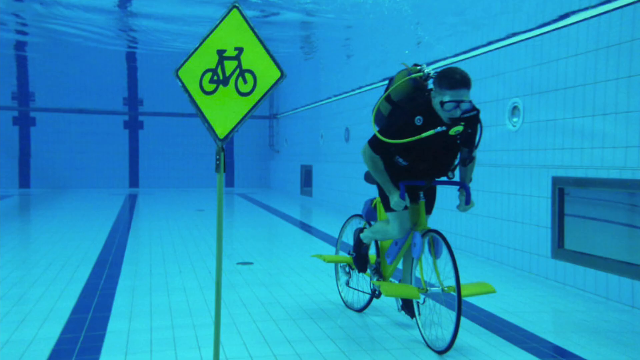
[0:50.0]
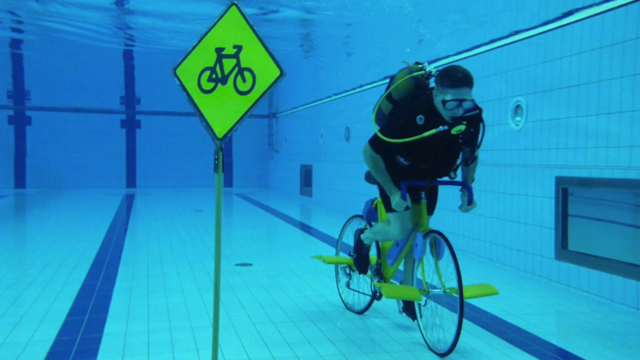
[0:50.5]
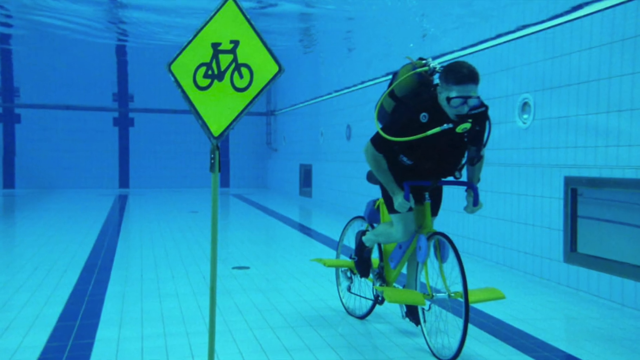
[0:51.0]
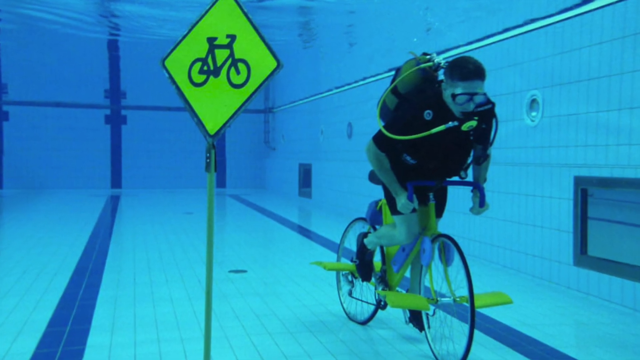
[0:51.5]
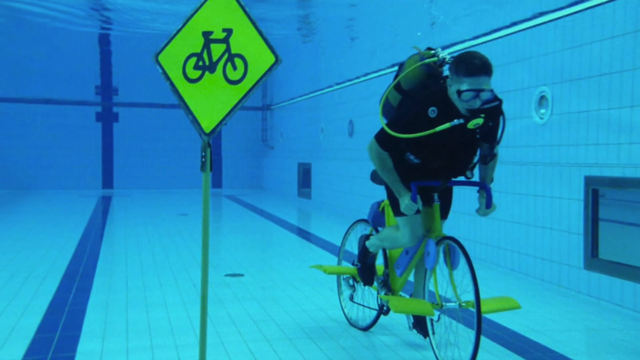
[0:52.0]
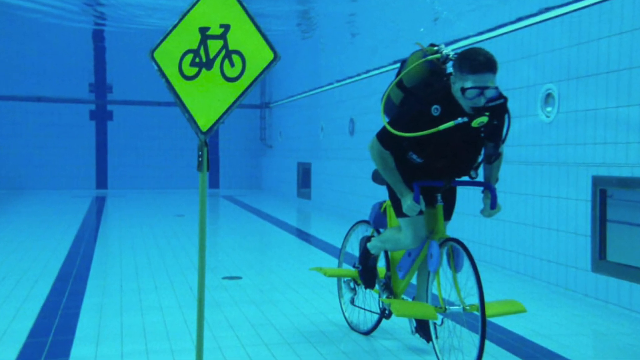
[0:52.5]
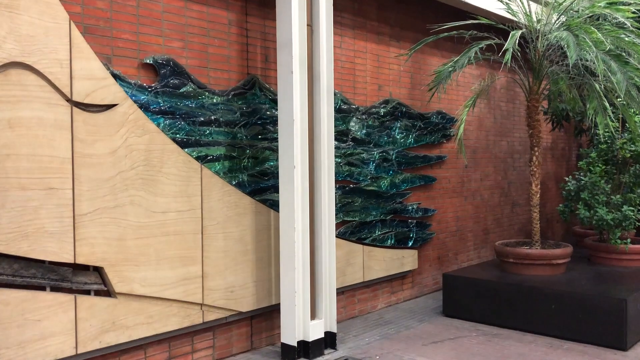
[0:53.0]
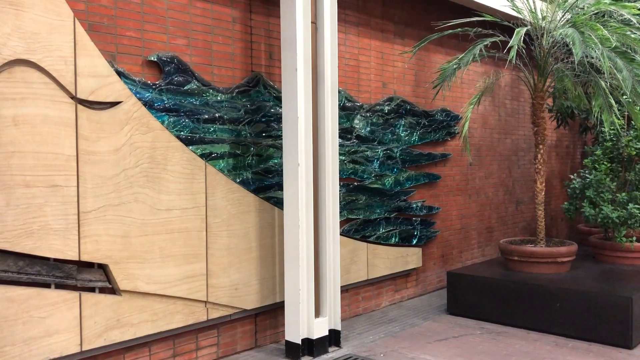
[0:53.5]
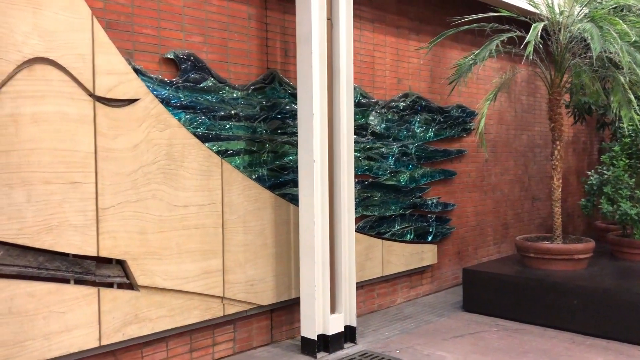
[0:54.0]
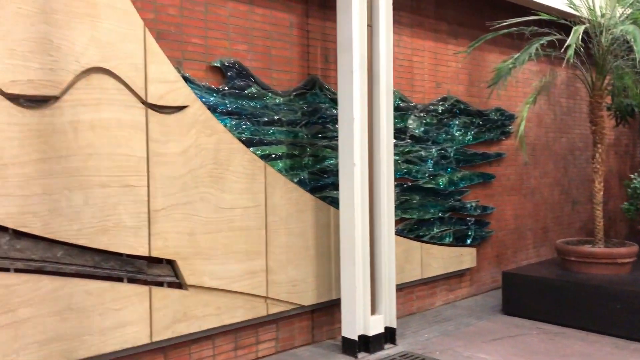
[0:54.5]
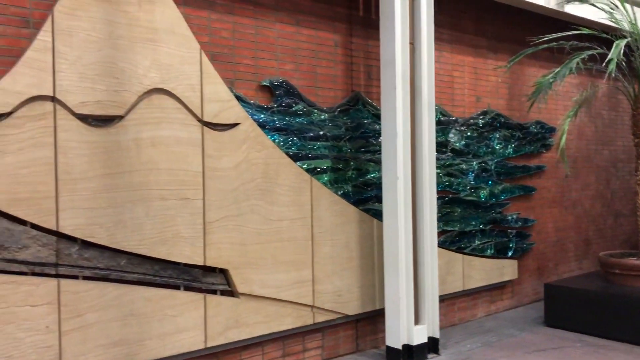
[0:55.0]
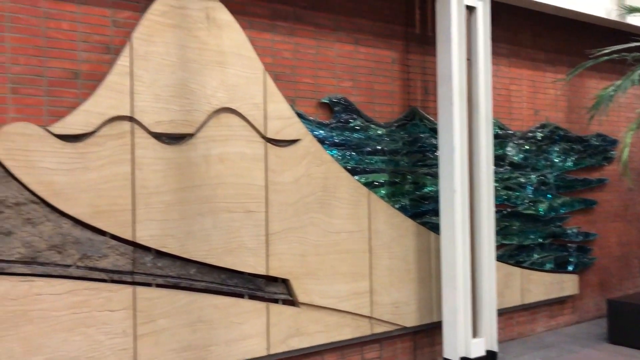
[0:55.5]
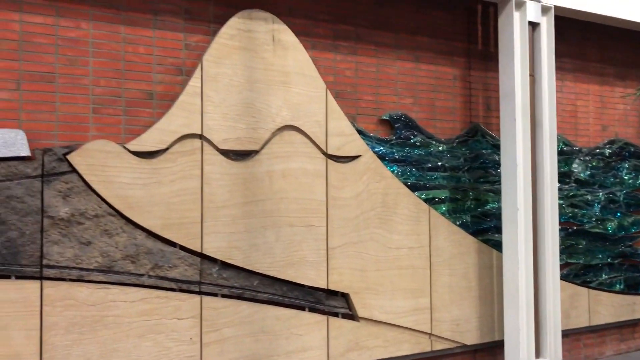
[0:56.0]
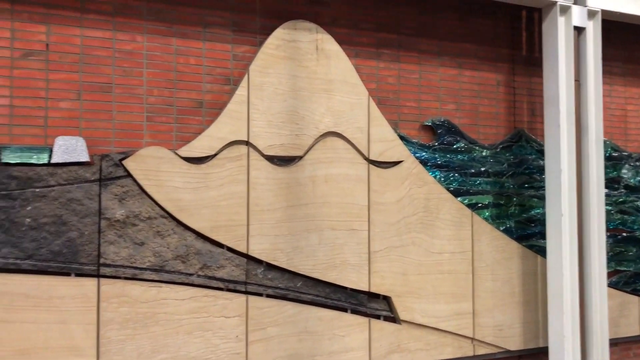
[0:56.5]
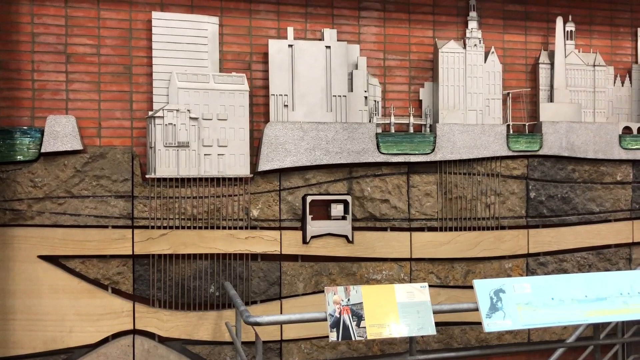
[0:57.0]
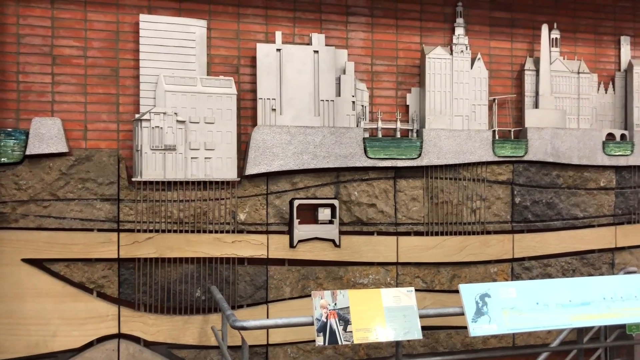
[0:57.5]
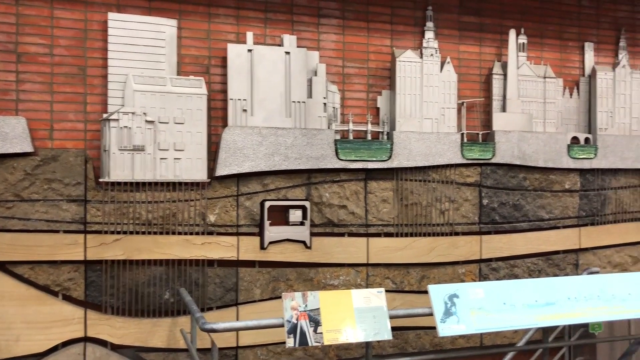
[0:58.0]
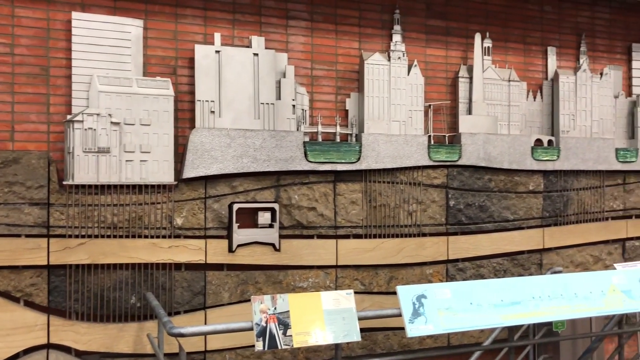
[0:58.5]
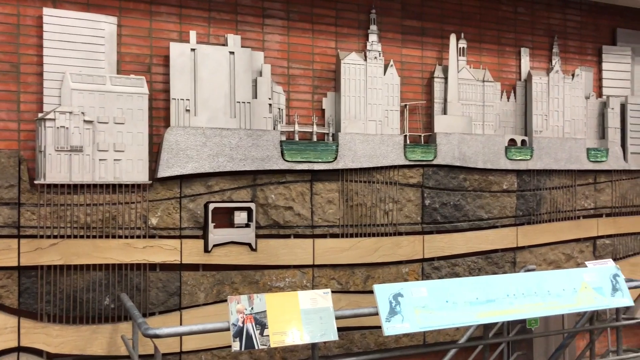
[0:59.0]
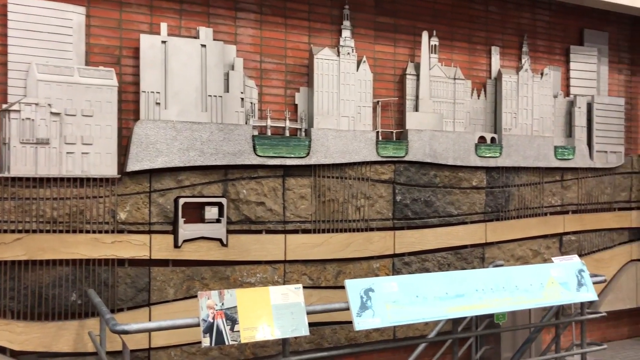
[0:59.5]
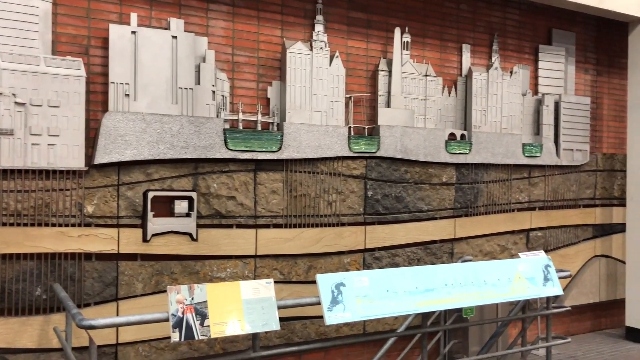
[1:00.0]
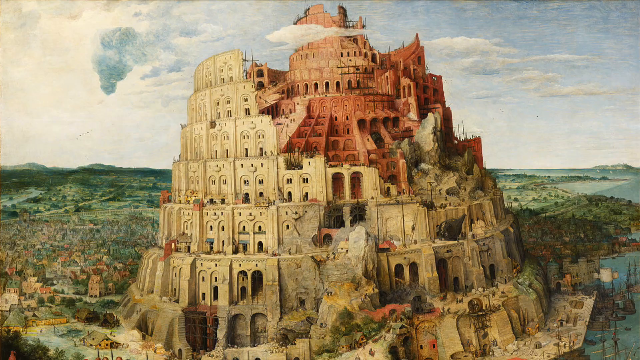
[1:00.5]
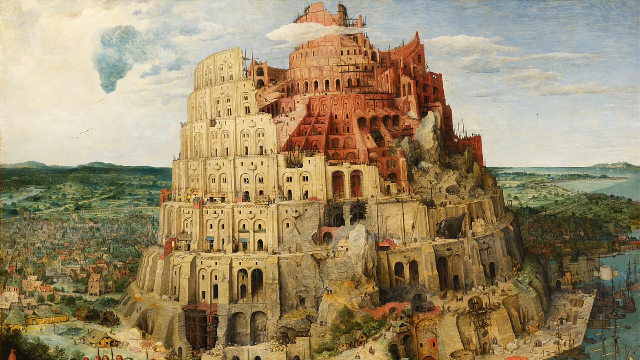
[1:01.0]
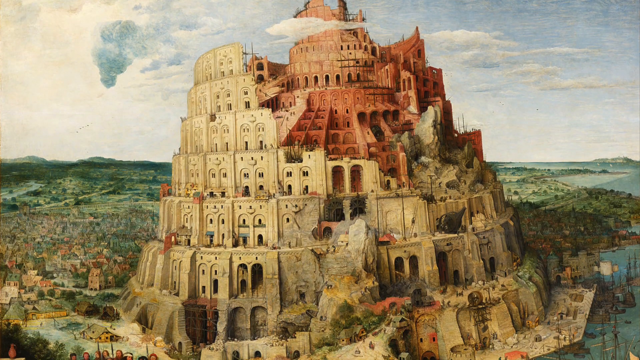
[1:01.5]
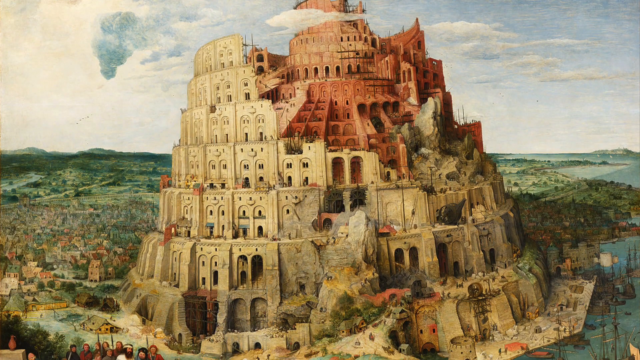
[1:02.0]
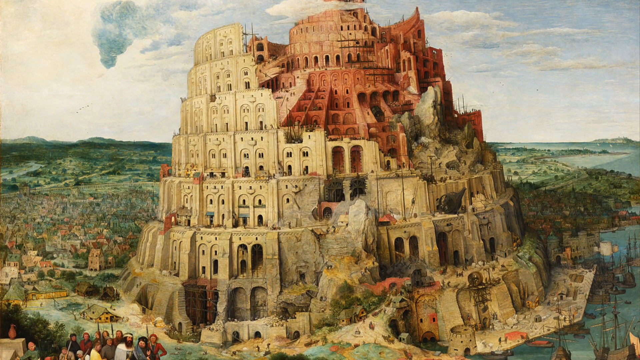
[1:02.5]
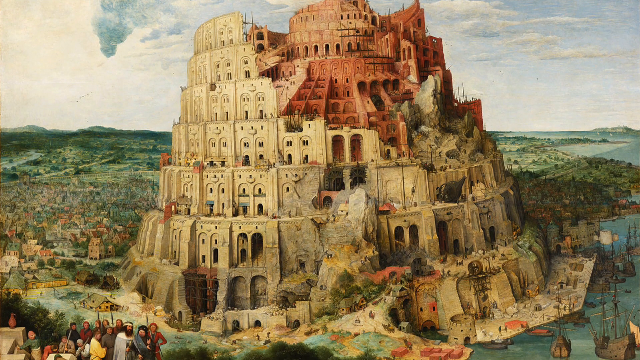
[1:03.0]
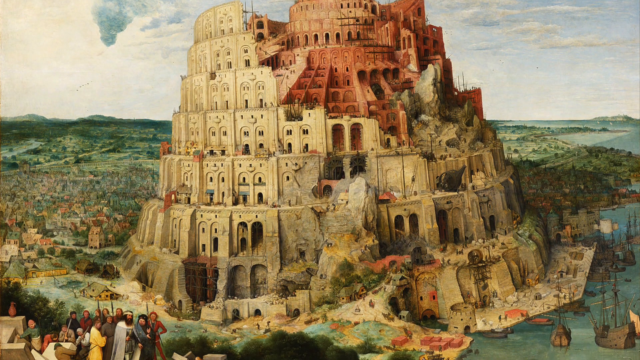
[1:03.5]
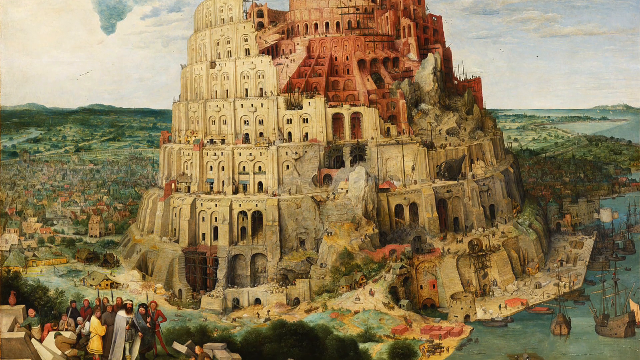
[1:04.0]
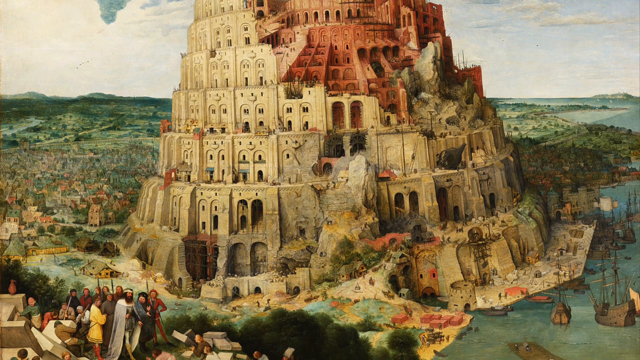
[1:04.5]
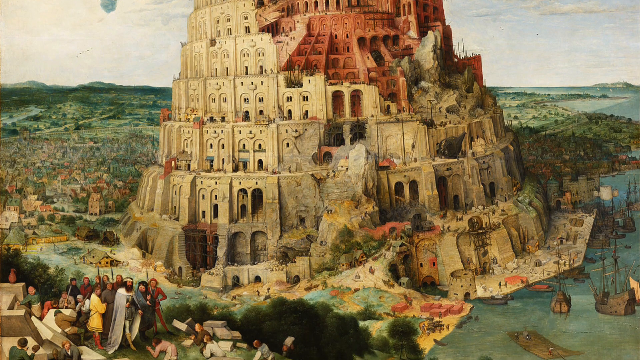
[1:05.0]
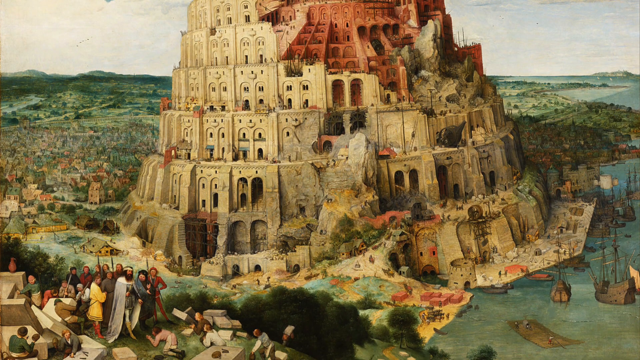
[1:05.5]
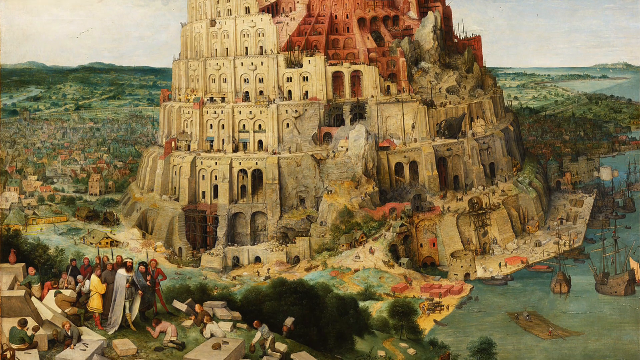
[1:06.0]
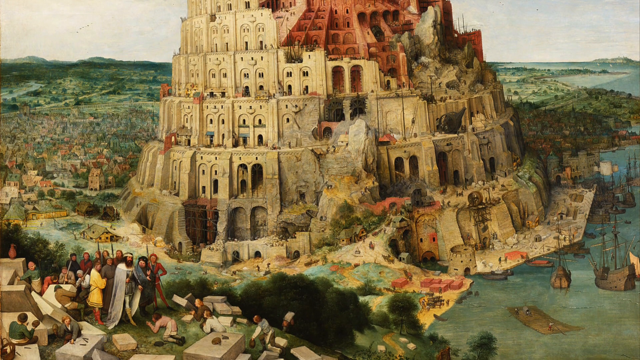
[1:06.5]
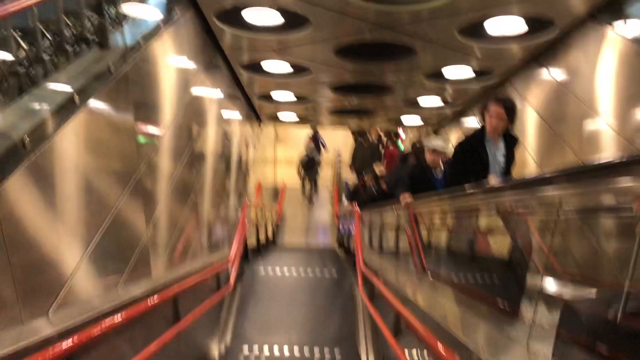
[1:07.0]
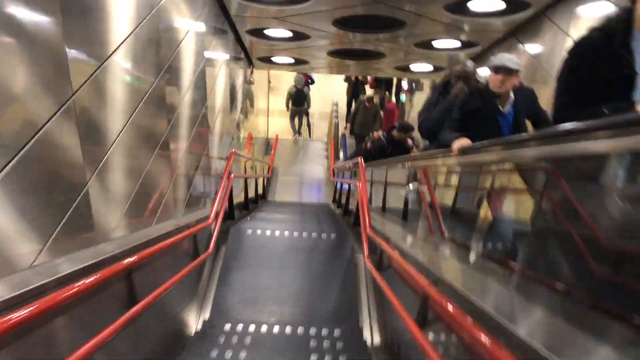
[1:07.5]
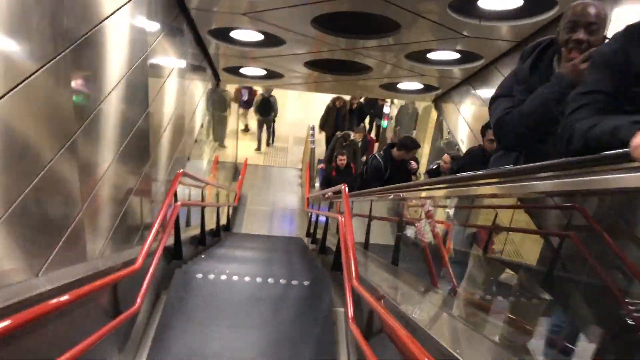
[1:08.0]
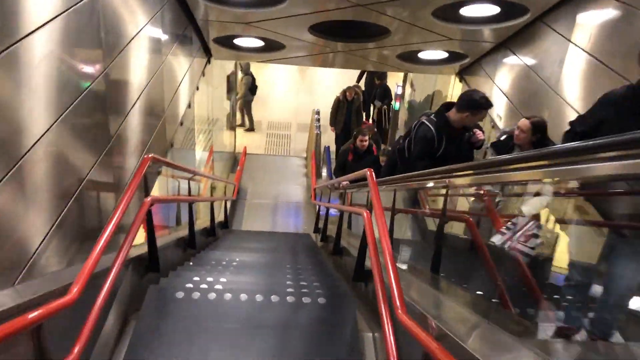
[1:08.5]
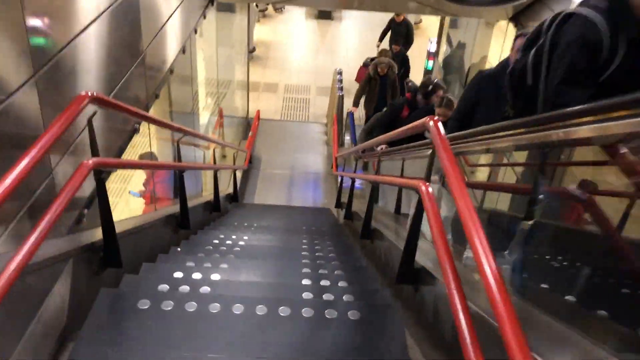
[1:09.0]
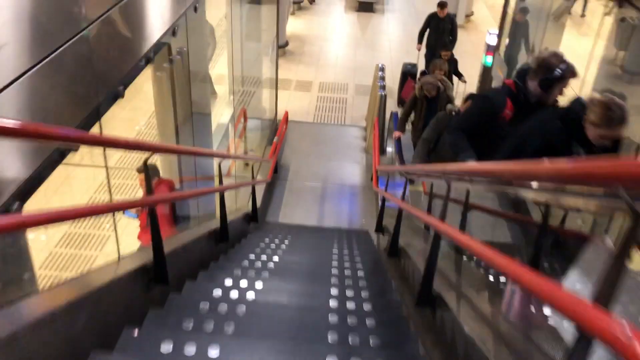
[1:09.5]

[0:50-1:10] A cyclist in a swimming pool wears scuba kit: an oxygen tank on his back, goggles, and the oxygen mask in his mouth. He is sat on a bicycle with his feet on the pedals, cycling next to a yellow diamond-shaped sign with a black bicycle on it. The view zooms into that image, then moves to what looks like a hotel lobby with a small palm tree and what looks like a woodwork artistic sculpture on the wall featuring various buildings. Next is a picture of some kind of tall castle that looks quite medieval, beige on one side with a more orange-tan section in the middle, about six storeys high, possibly seven. As the view pans down, the extra storeys come into view; it is incredibly tall, and a few people are stood on the cliff edge. The scene moves to stairs that look like they go underground: on the left are stairs going downwards, which the person holding the camera walks down, and on the right is an escalator with lots of people coming up. The video goes back to the image of the person cycling in the swimming pool, then to the hotel's wooden sculpture on the wall, then to the seven-storey building, and back to the metro stairs.